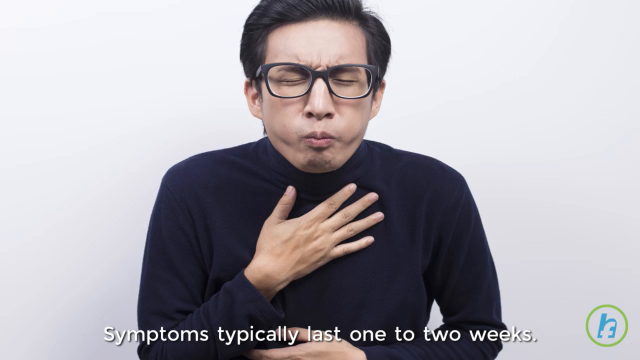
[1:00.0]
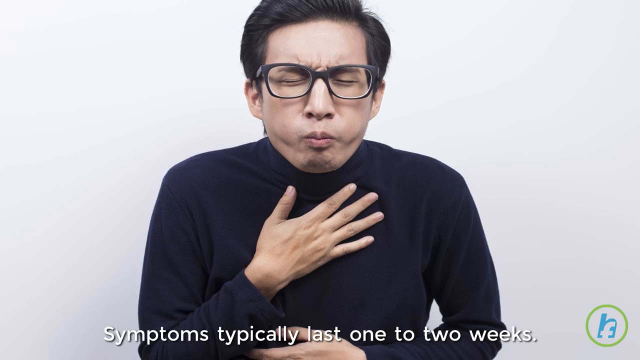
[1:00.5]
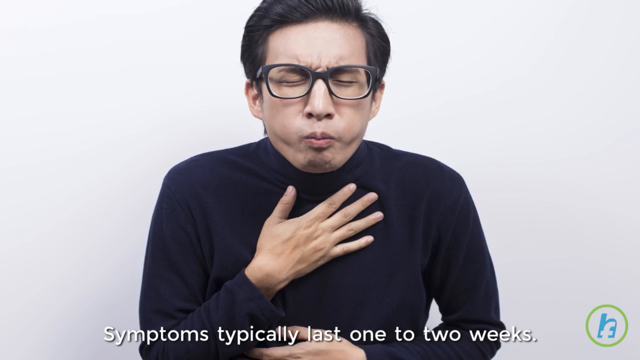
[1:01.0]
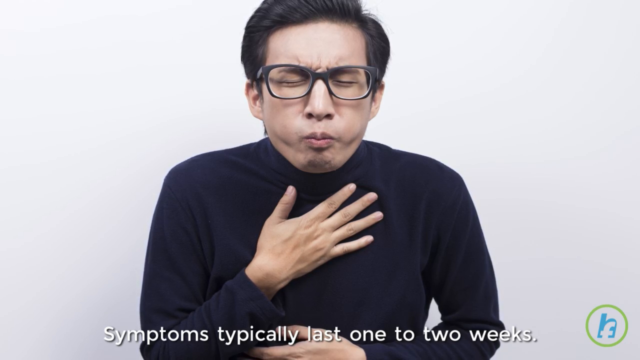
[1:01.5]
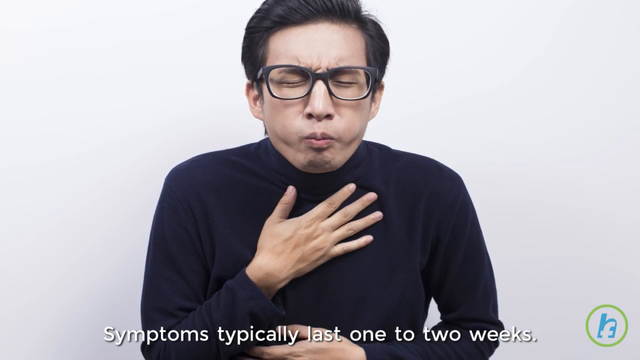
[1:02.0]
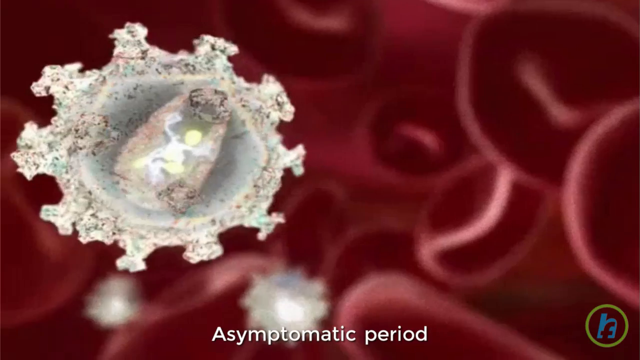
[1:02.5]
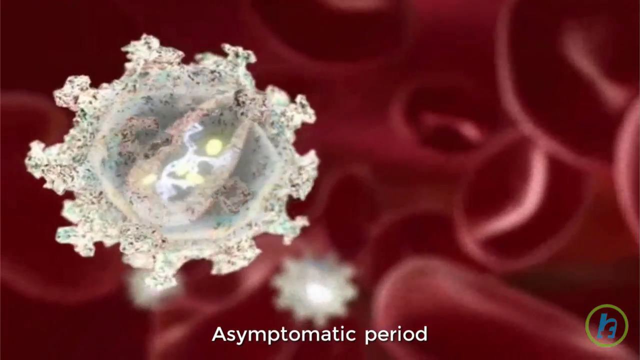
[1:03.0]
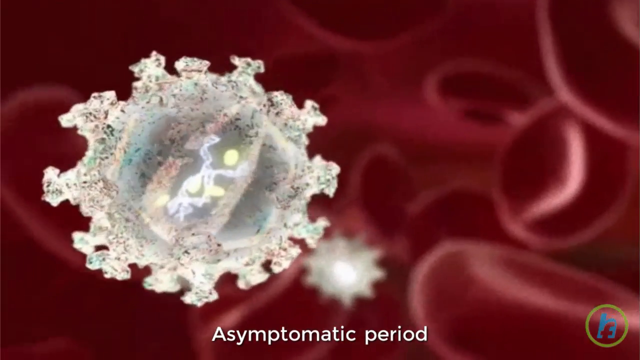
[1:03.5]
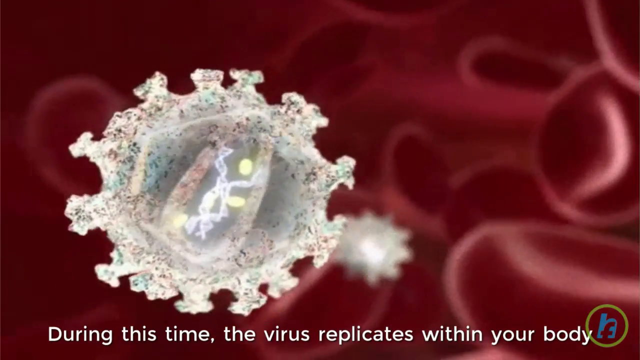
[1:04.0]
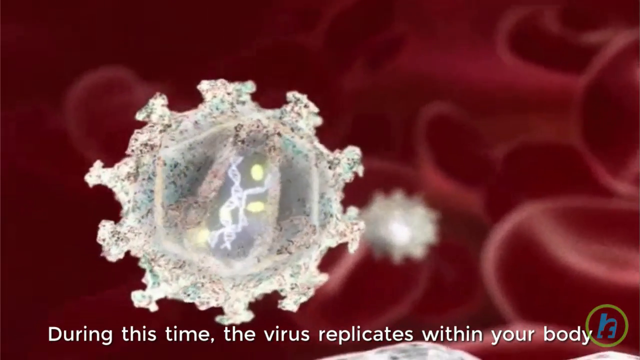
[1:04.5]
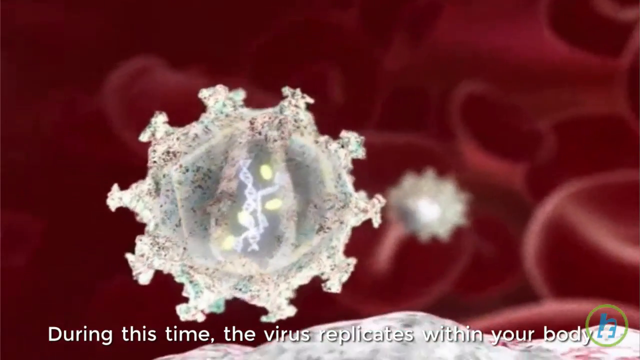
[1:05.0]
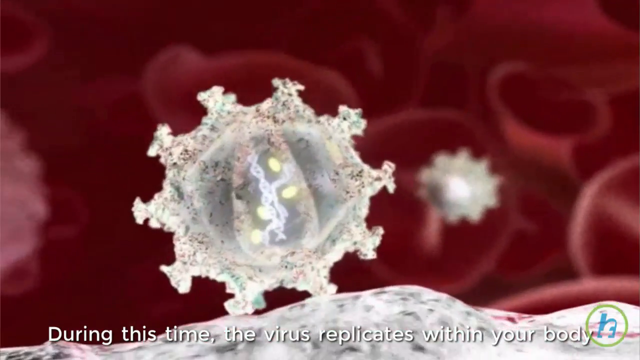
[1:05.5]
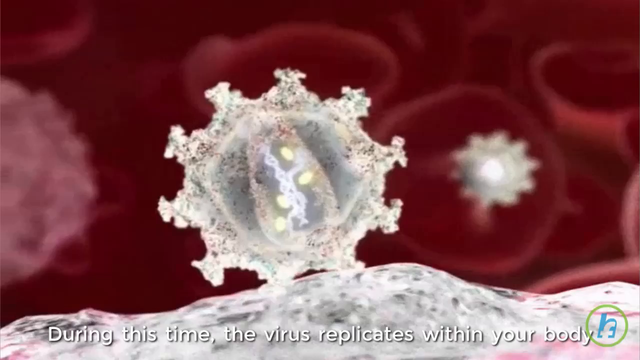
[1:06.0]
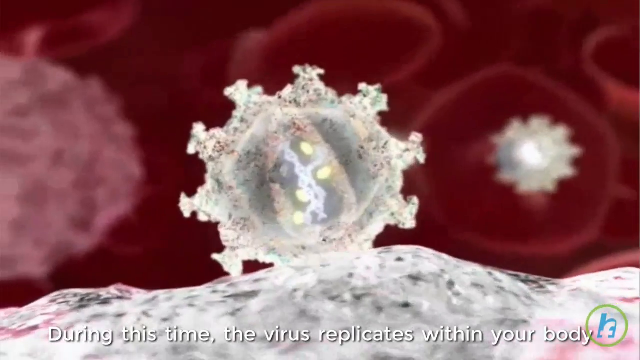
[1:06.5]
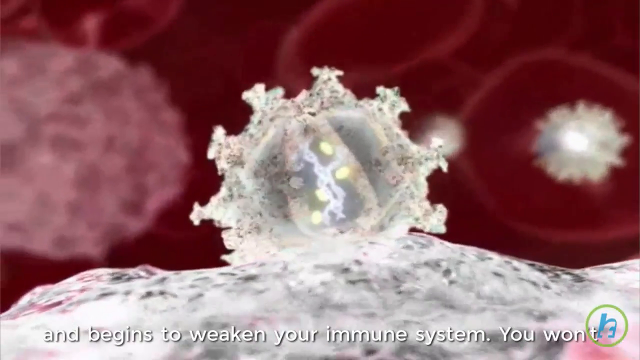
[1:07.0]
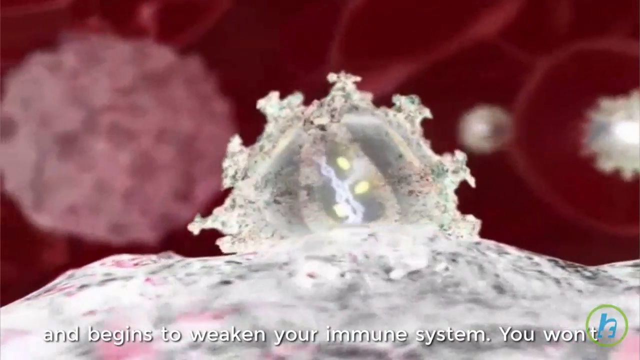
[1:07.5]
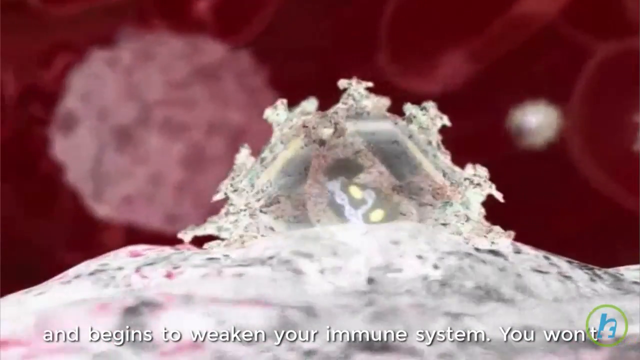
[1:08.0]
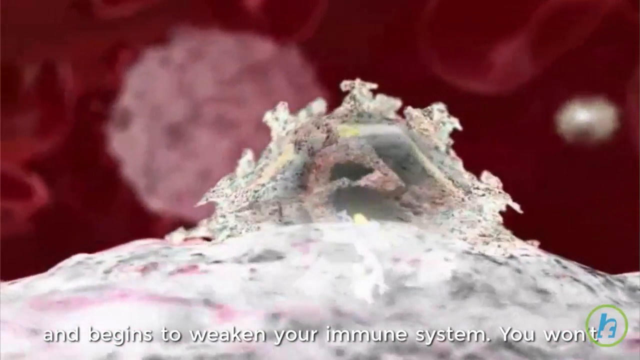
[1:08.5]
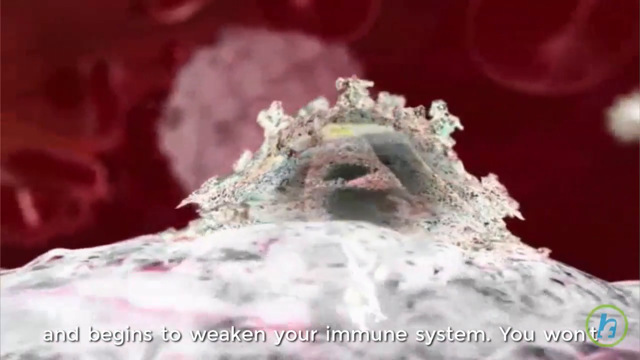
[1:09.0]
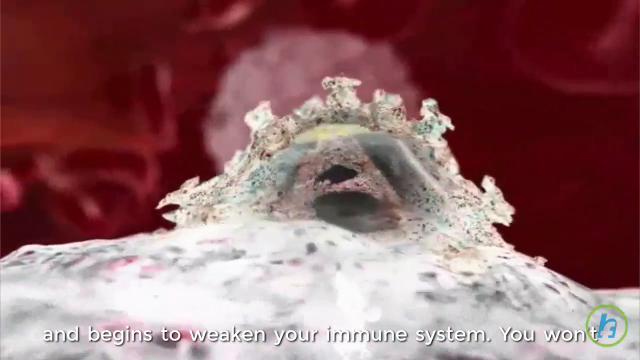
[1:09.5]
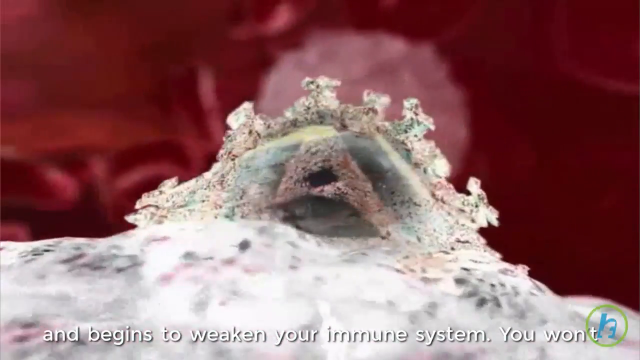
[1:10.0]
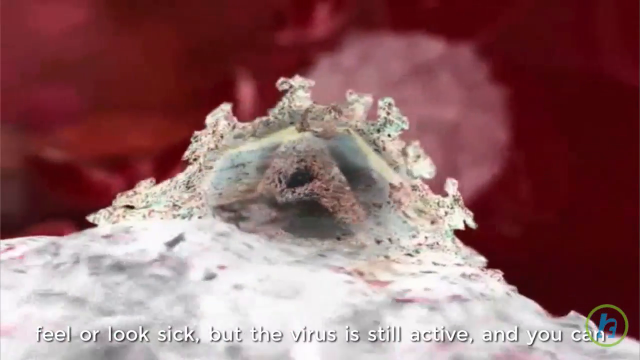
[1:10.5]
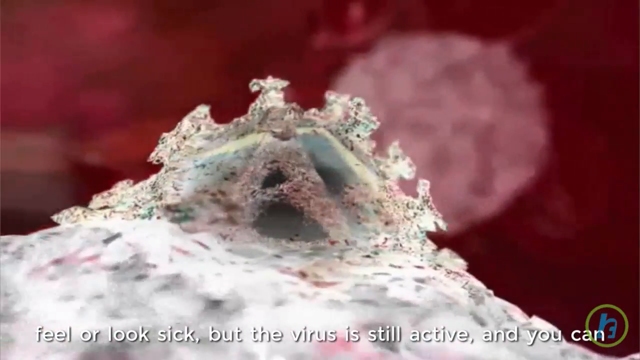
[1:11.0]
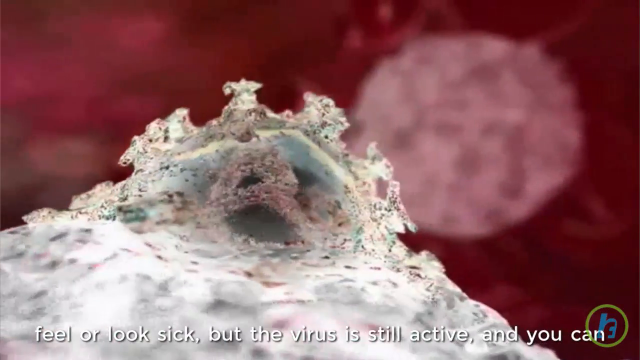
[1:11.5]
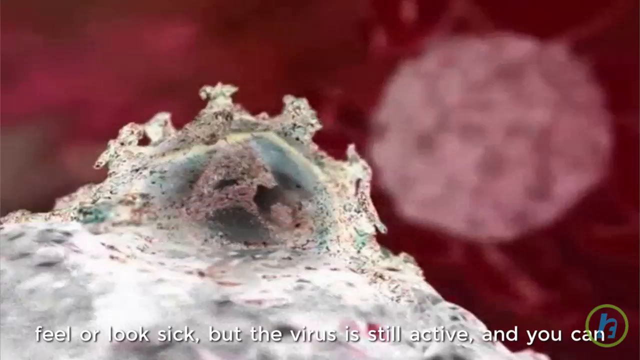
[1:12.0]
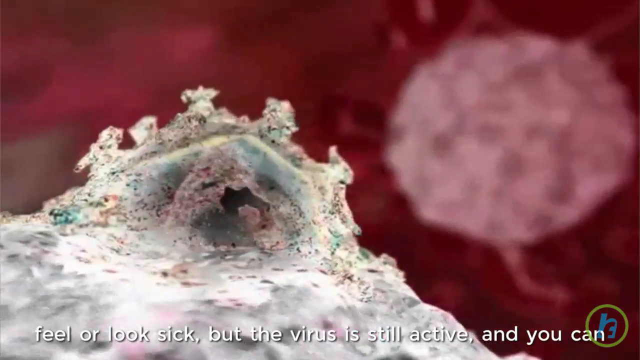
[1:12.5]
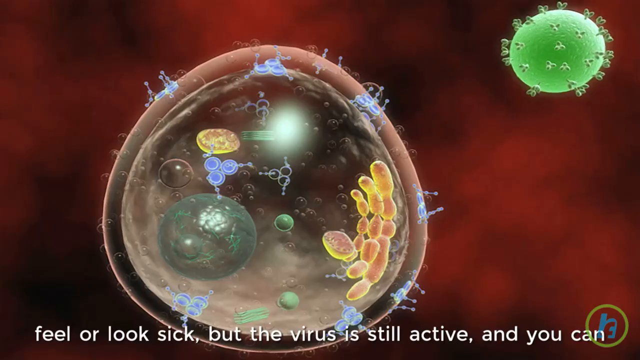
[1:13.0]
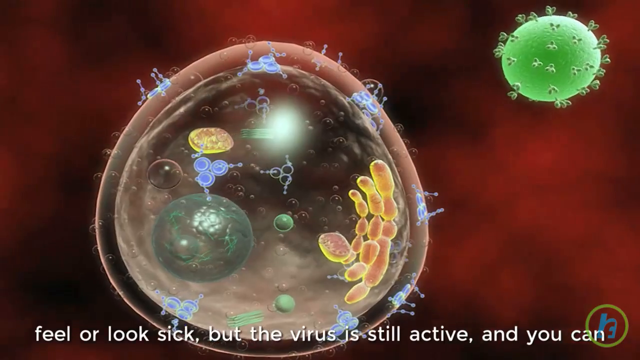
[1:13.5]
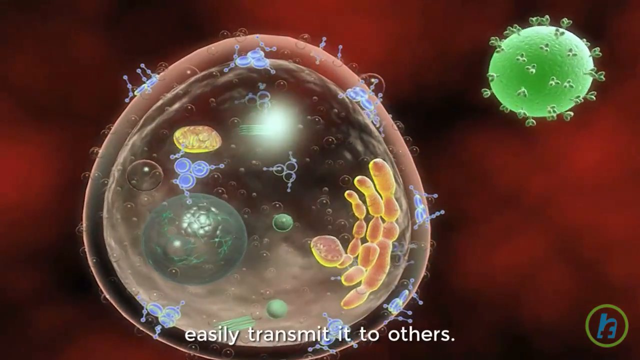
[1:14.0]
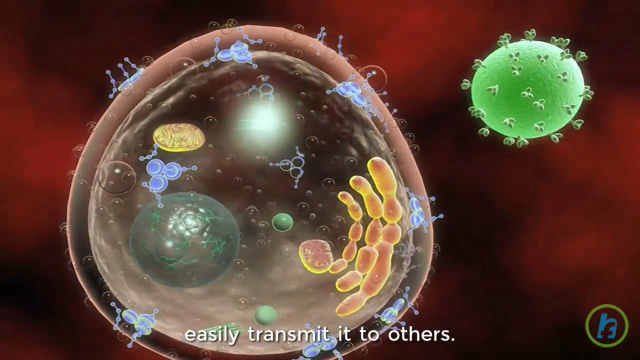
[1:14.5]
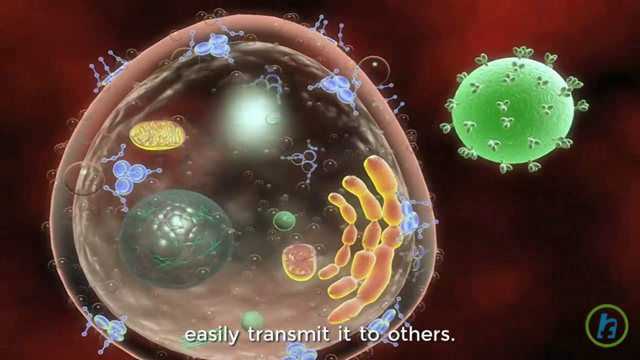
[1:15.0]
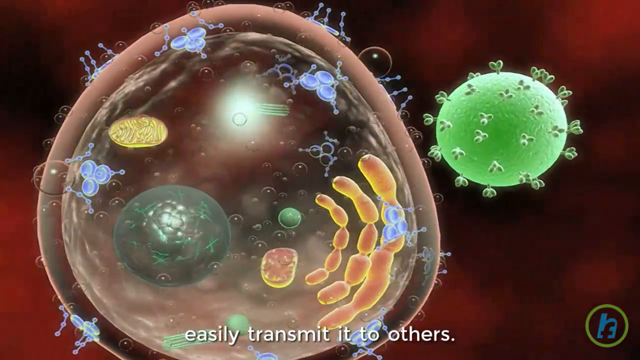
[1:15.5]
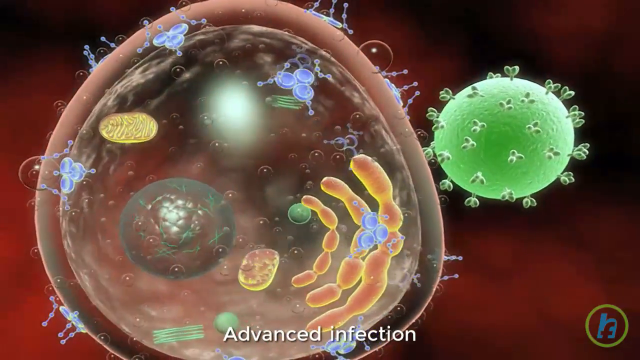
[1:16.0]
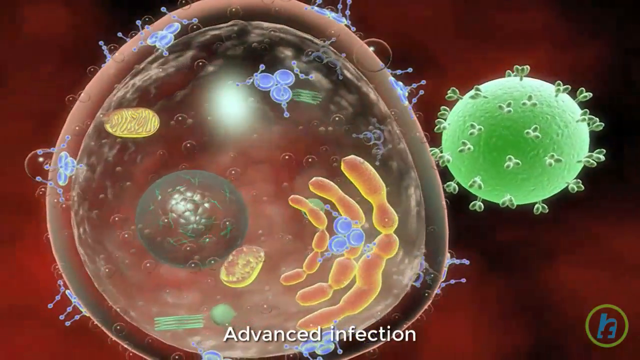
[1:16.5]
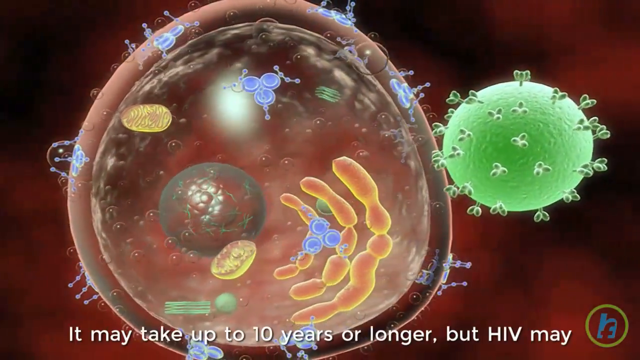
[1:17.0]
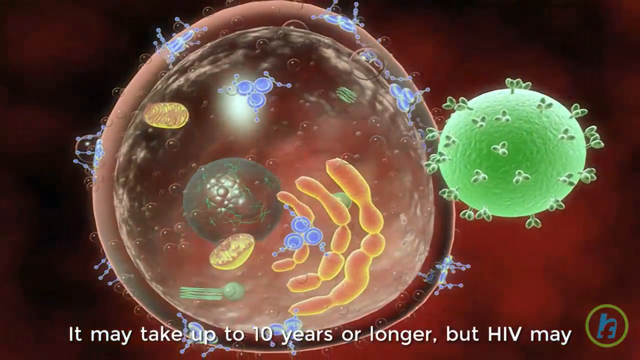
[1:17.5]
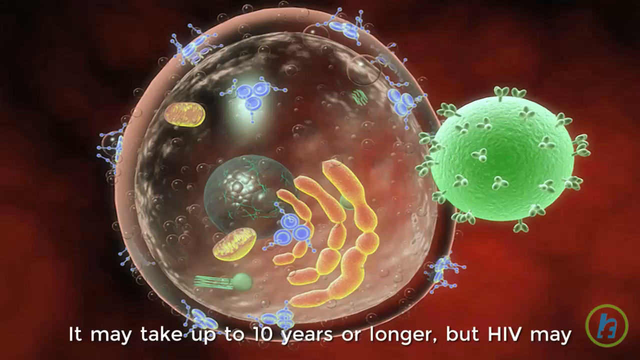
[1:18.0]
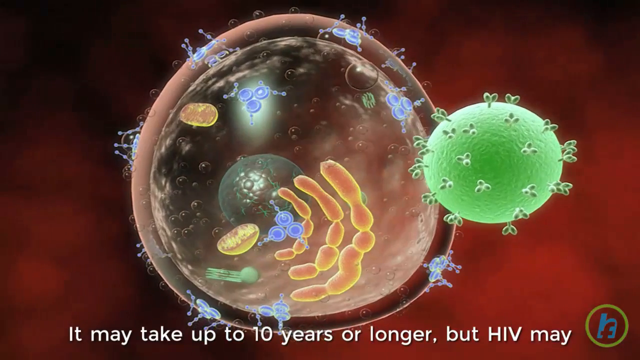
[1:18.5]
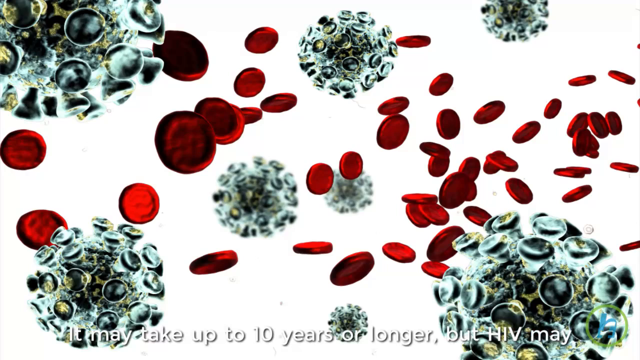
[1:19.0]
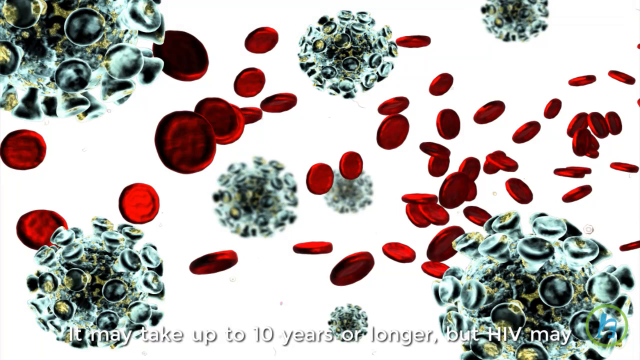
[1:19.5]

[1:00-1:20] A still photo shows a man in a turtleneck with his eyes closed and his lips puckered. His right hand is over his heart but a little closer to his throat than his heart, and he looks like he is maybe about to vomit. Next is a computer-generated animation of what looks to be microscopic cells: they are white with ridges around the edge, kind of floating in an environment with red in the background, spinning and turning. Finally, one of the big white blobs lands on another white blob and they kind of morph together, the floating blob becoming part of the bigger one. Then a different computer animation shows more cells: one is clear, very large and globe-shaped, and a little green circular animation of what appears to be a cell floats next to it.